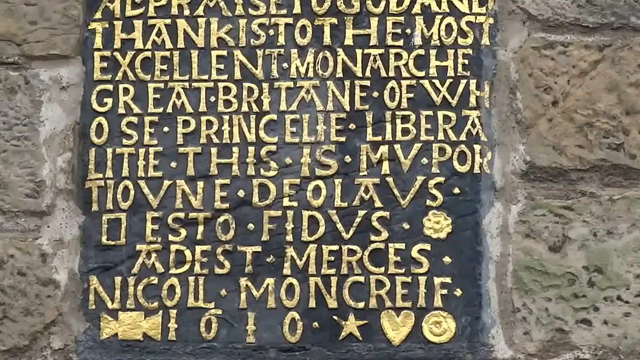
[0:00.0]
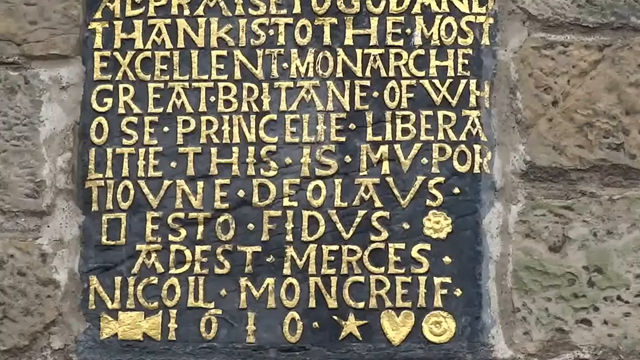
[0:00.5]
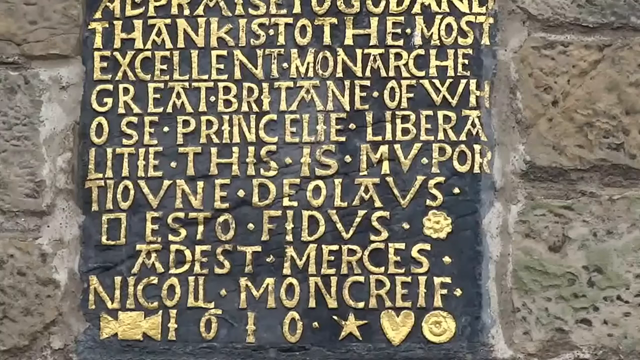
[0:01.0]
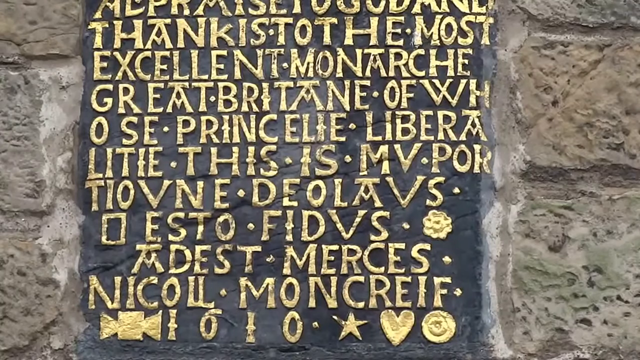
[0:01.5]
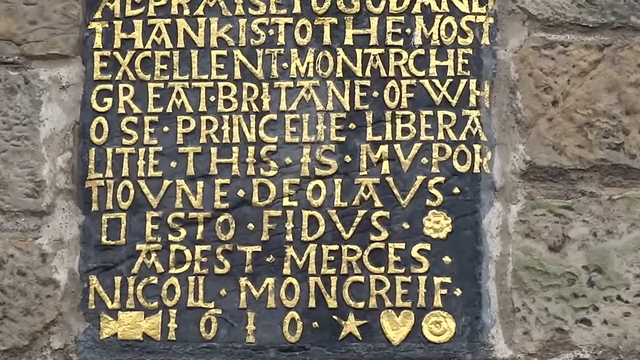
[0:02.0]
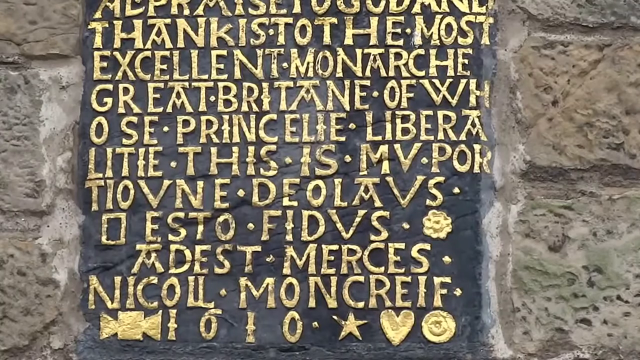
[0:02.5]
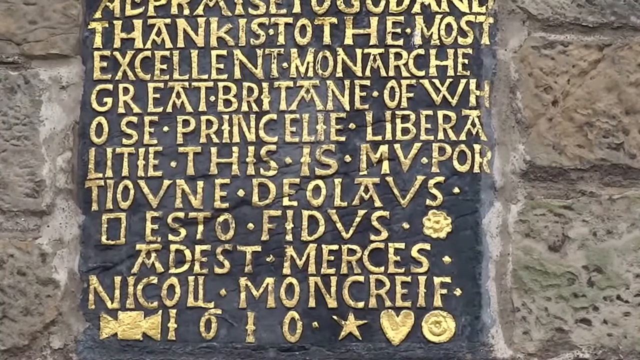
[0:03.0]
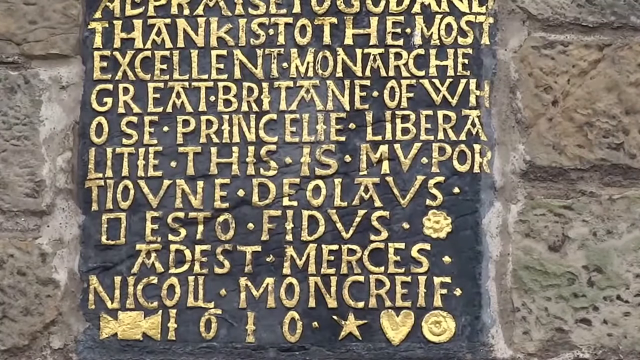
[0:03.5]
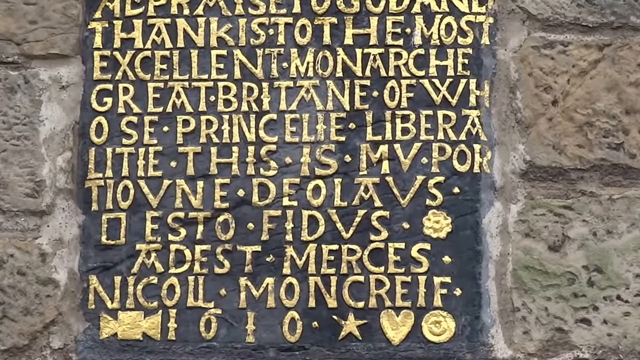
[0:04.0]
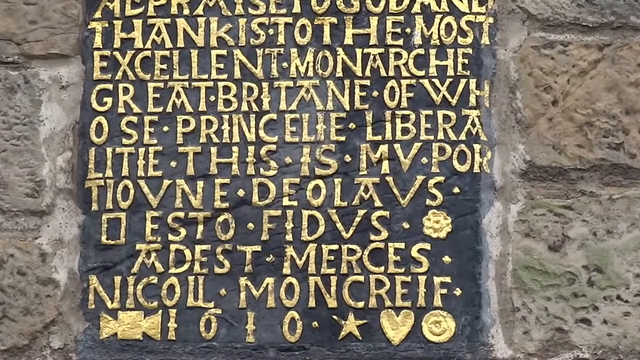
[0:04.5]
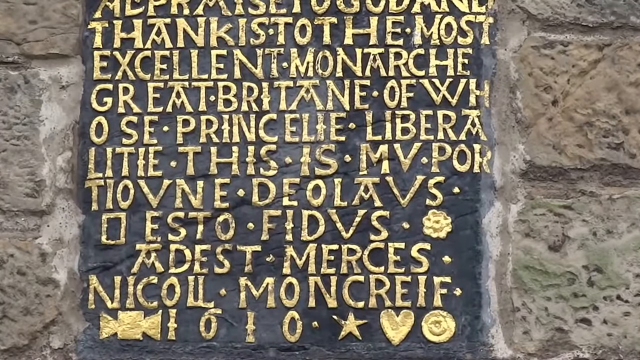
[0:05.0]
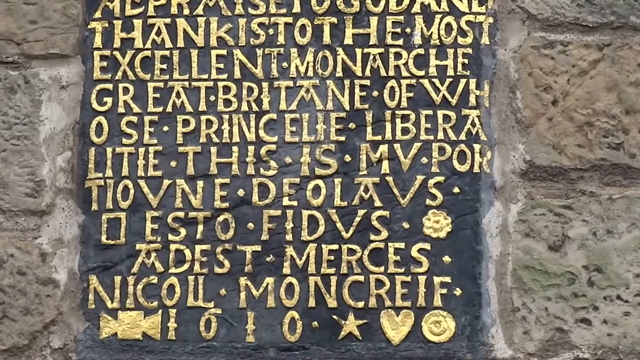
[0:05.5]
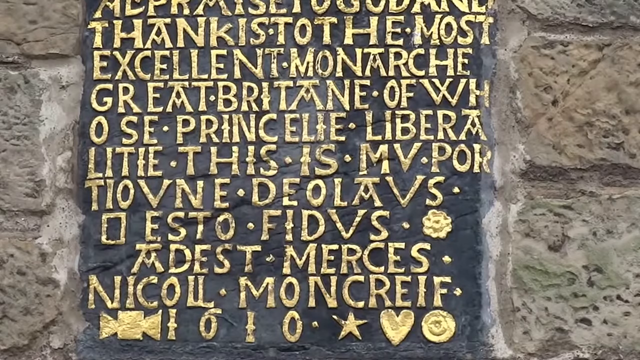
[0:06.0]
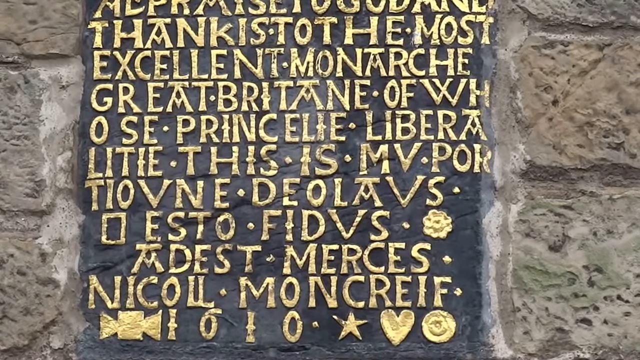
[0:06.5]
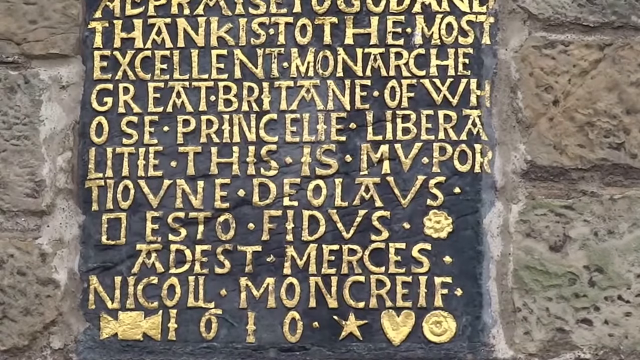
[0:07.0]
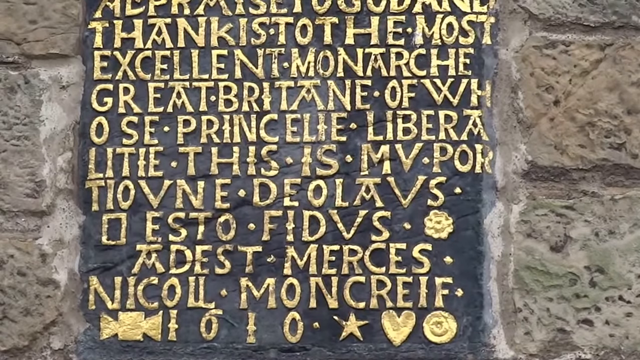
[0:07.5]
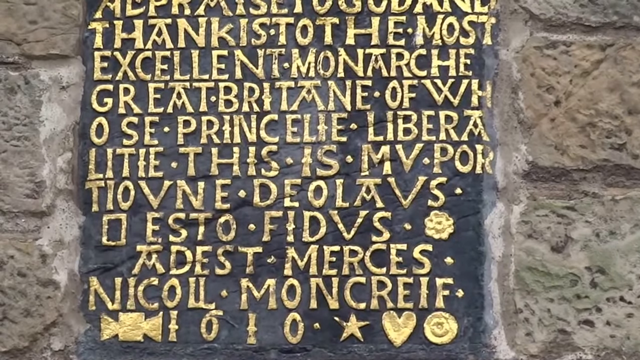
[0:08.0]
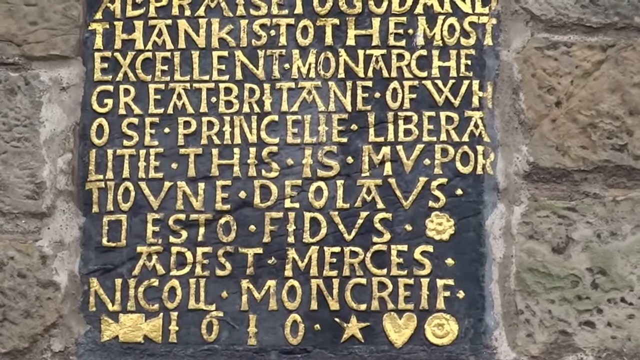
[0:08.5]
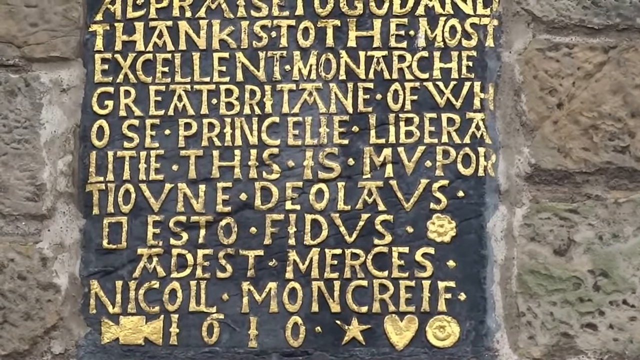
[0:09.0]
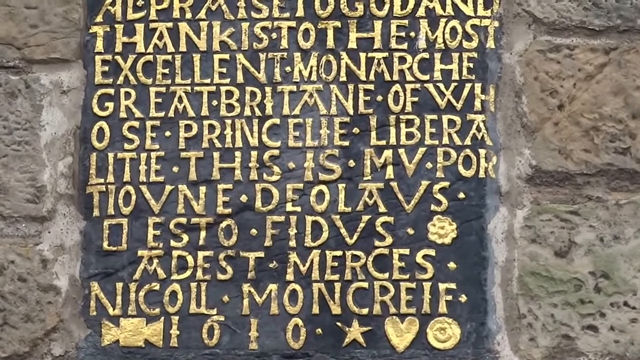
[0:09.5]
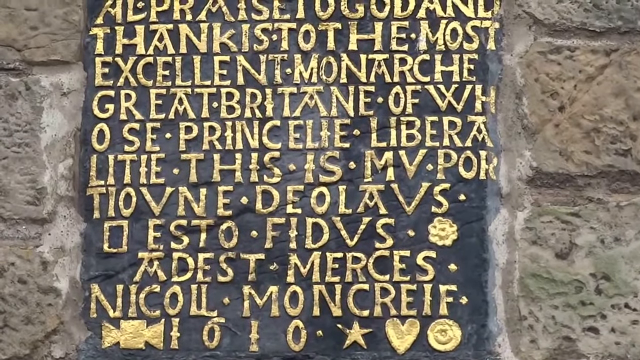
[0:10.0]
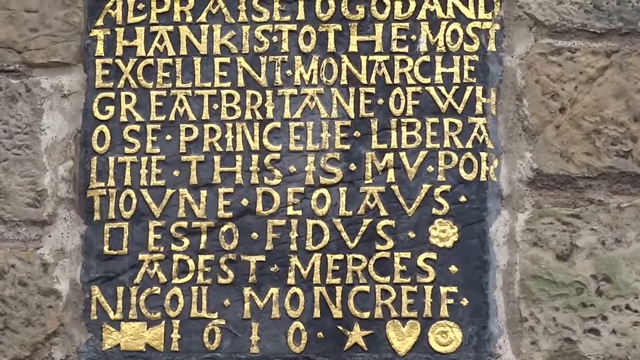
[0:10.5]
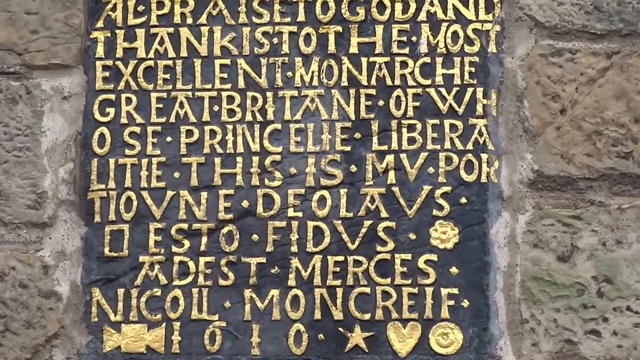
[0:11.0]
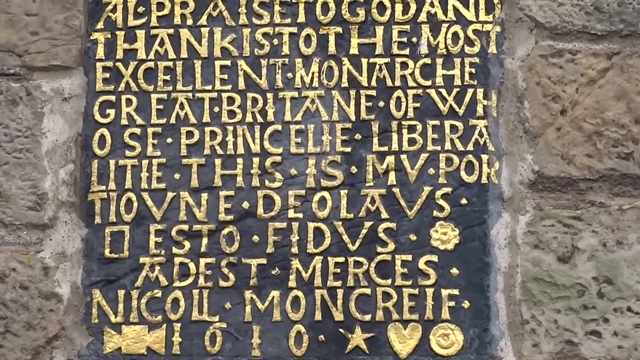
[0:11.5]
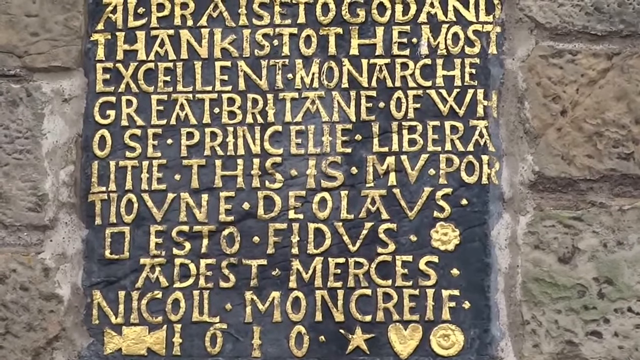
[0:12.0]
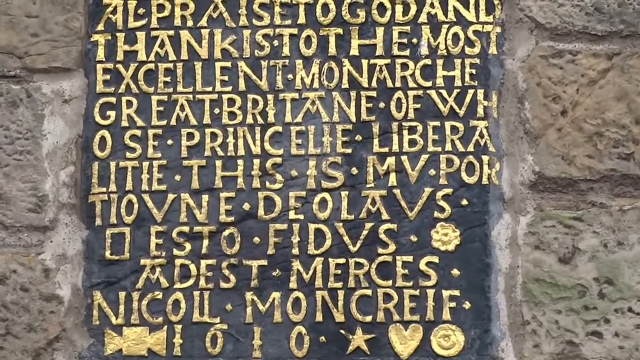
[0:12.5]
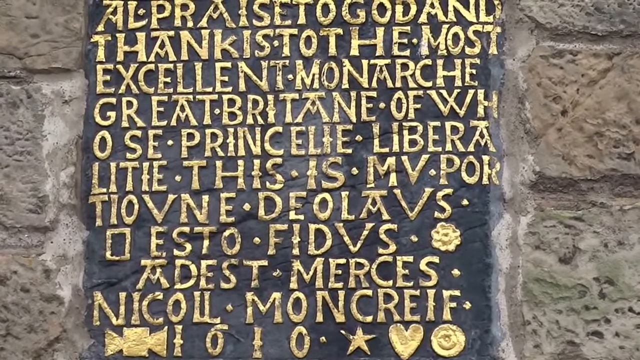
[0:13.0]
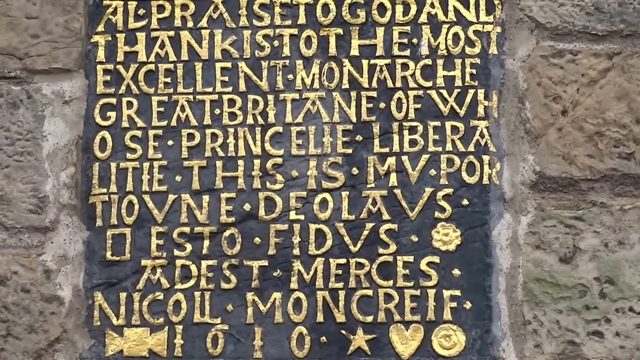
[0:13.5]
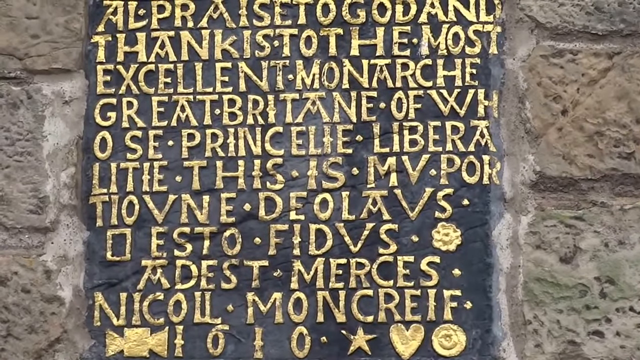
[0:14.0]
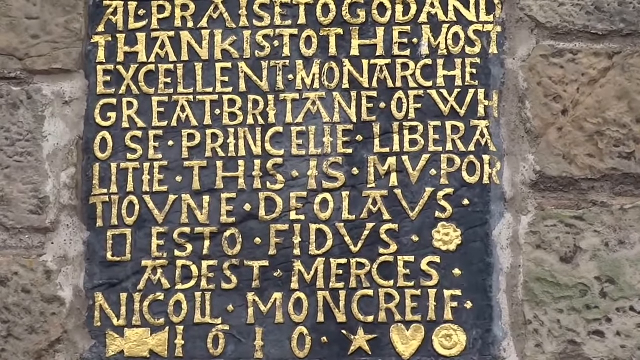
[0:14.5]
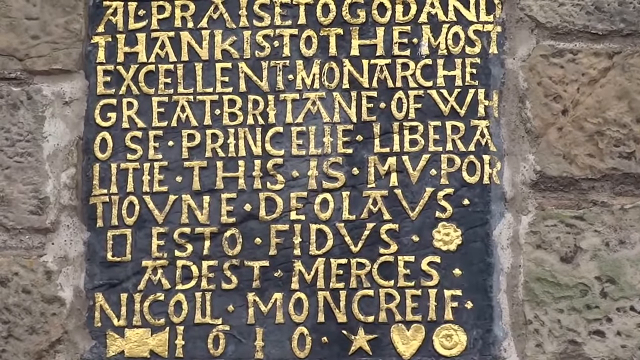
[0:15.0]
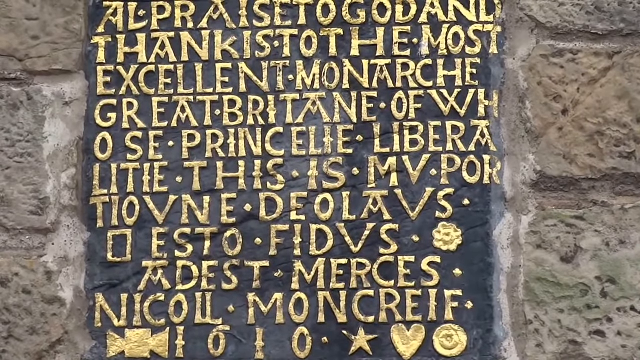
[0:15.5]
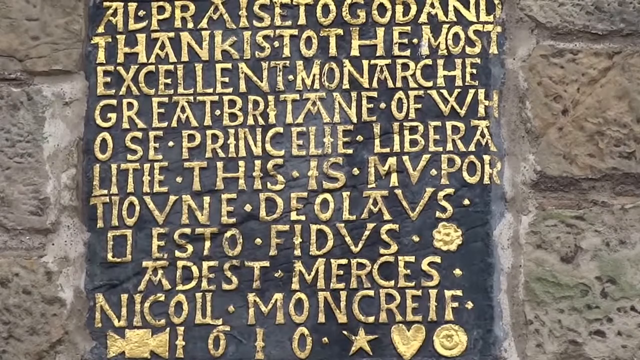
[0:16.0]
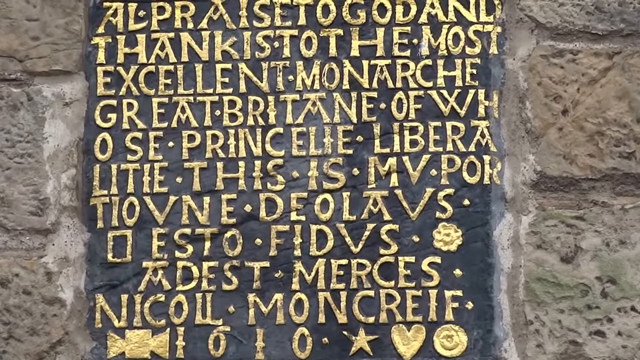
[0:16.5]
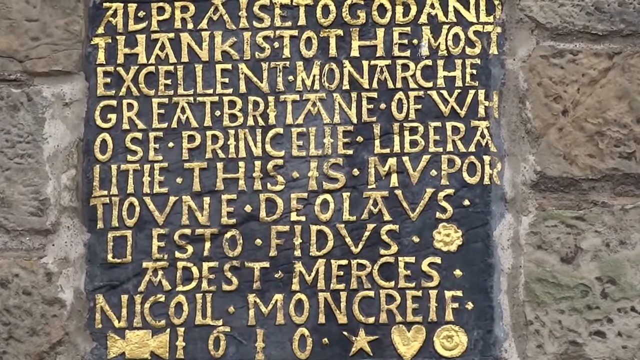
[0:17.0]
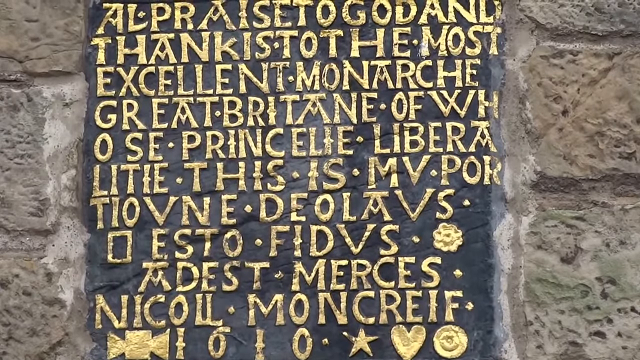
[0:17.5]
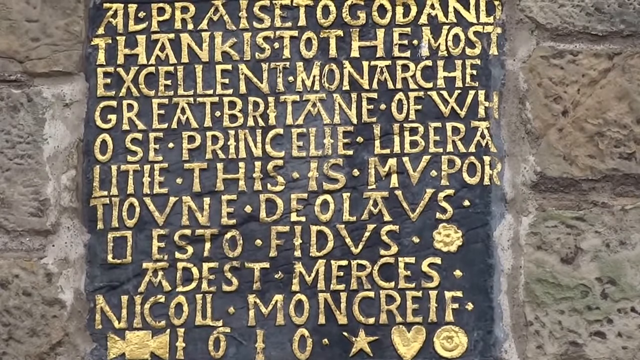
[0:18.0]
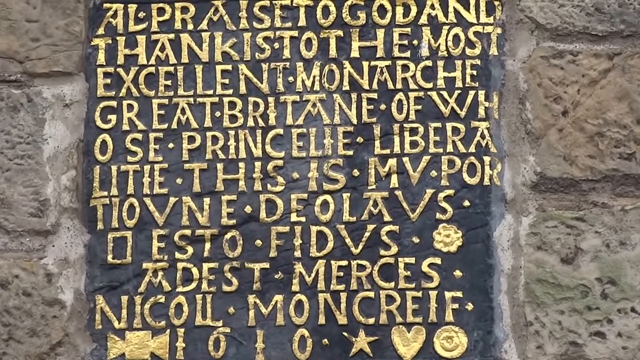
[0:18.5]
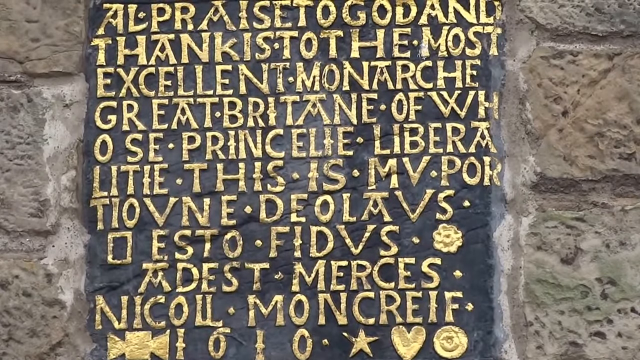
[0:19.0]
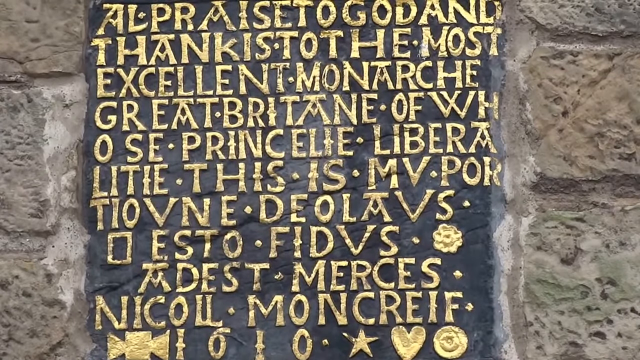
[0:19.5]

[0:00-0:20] A rough-looking, brownish-gray stone wall bears an engraving in gold-colored capital letters on a black background. The engraving reads "thanks to the most excellent monarch great Britain of whose princelie", with each word separated by what looks like a full stop. The words at the beginning are in English, while the rest is in a different language that could be Latin or Italian. The camera stays focused closely on the writing, and nothing else is visible. It moves slightly closer very slowly, so slowly the movement is hard to notice, and otherwise stays mostly still.